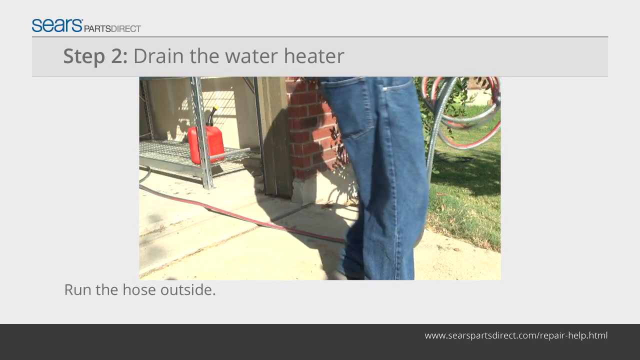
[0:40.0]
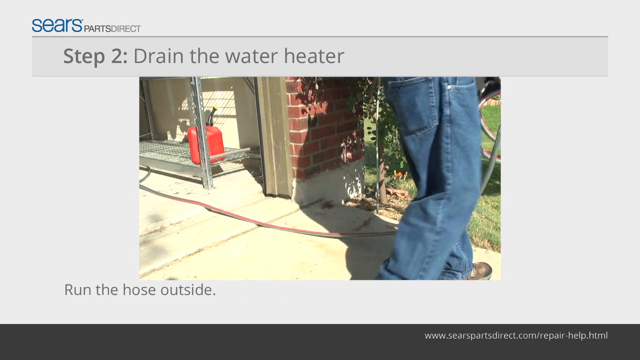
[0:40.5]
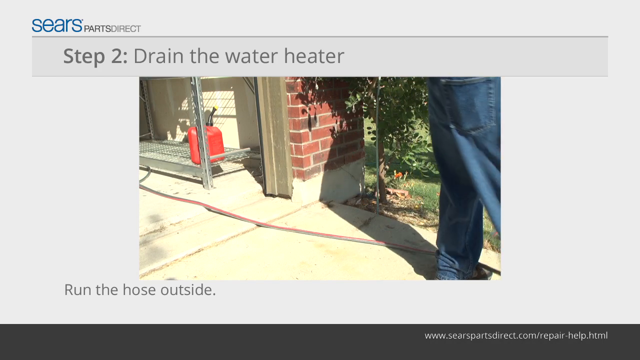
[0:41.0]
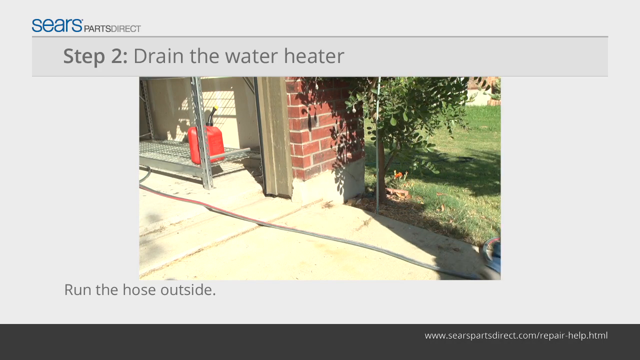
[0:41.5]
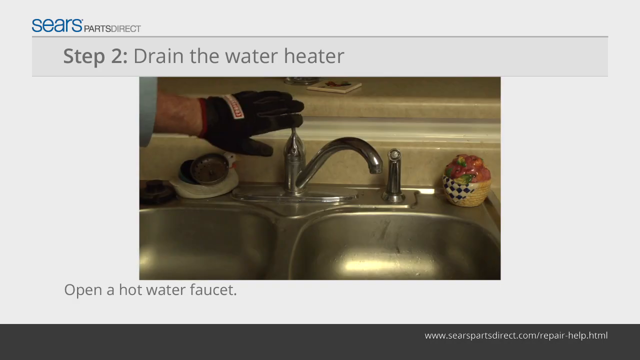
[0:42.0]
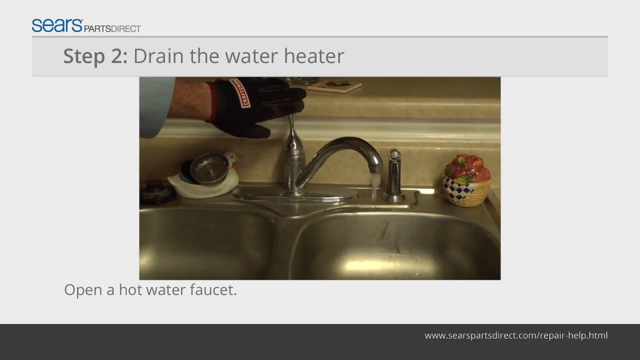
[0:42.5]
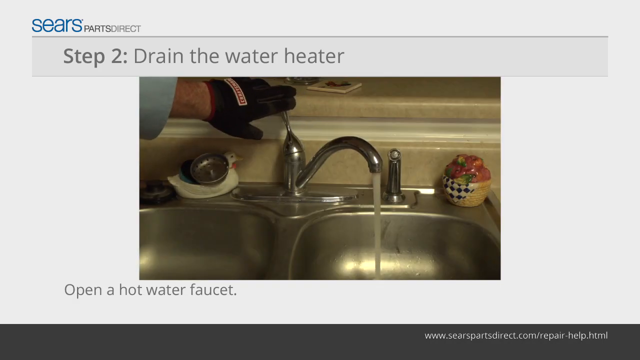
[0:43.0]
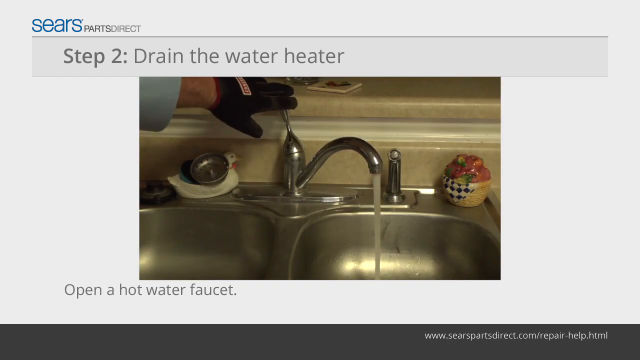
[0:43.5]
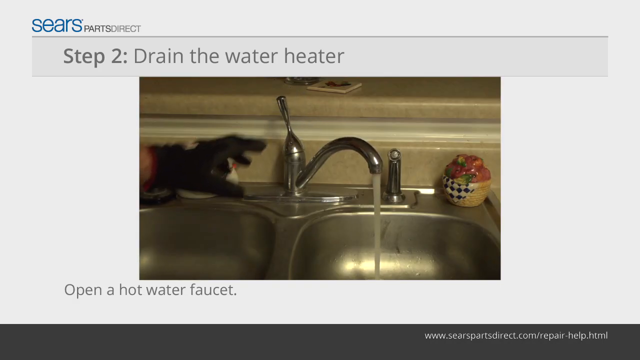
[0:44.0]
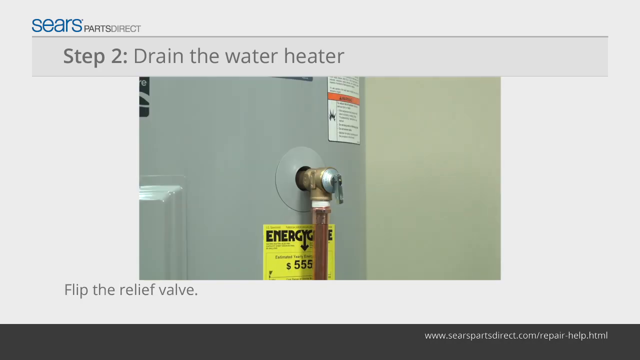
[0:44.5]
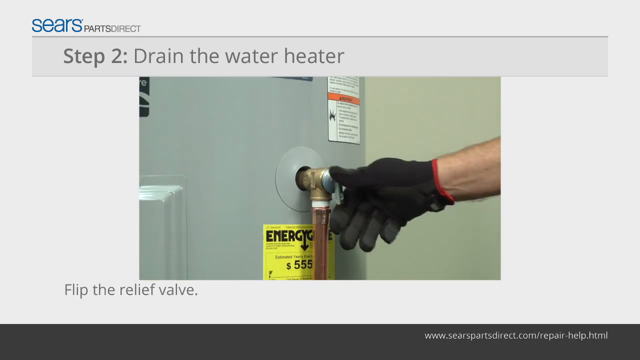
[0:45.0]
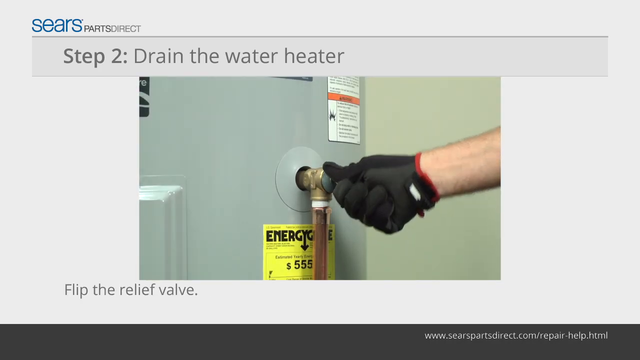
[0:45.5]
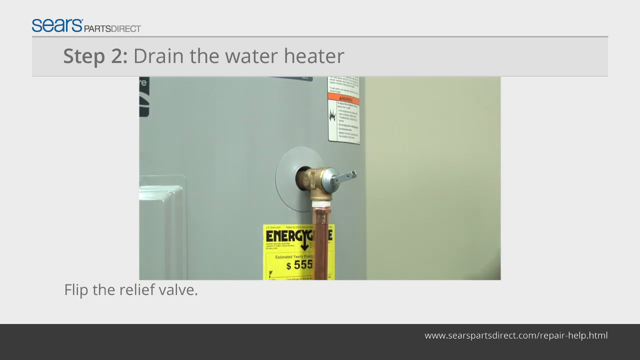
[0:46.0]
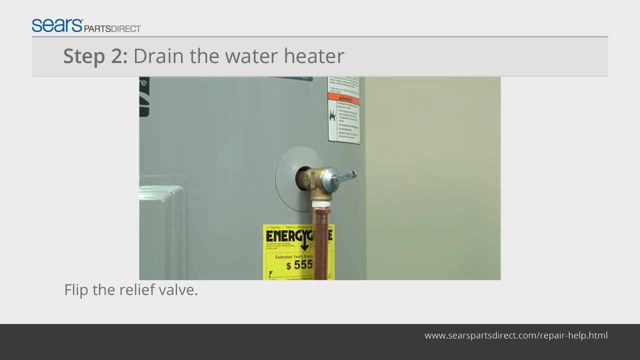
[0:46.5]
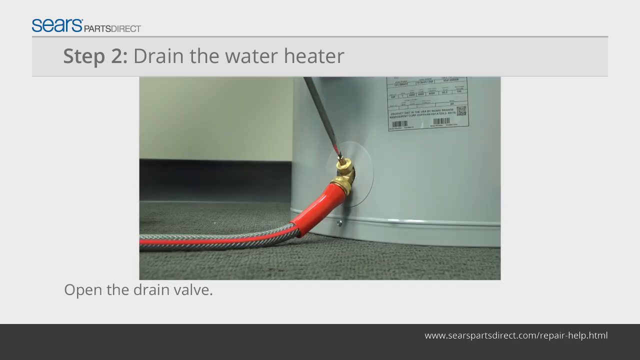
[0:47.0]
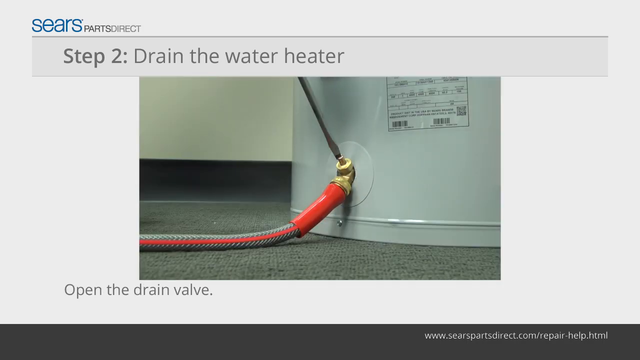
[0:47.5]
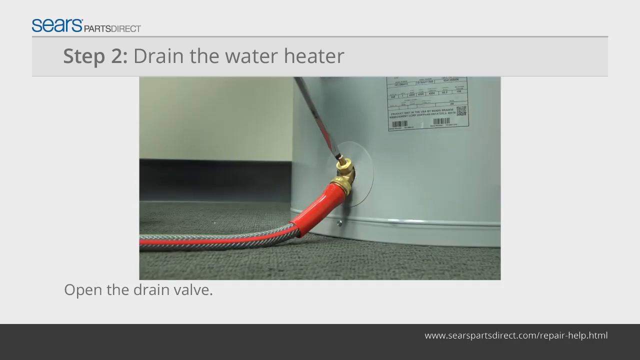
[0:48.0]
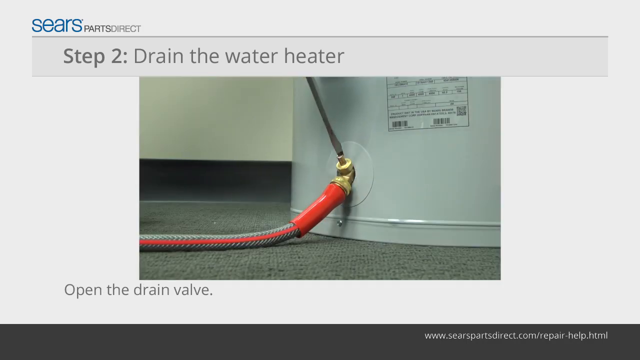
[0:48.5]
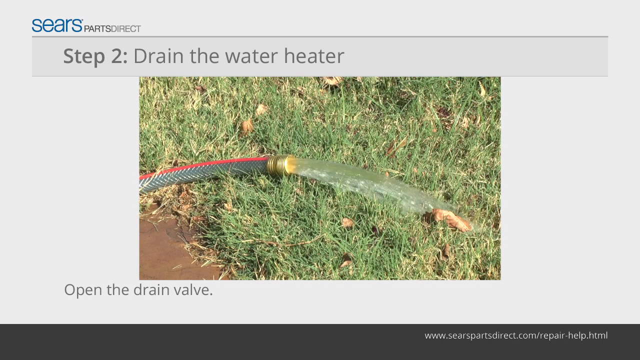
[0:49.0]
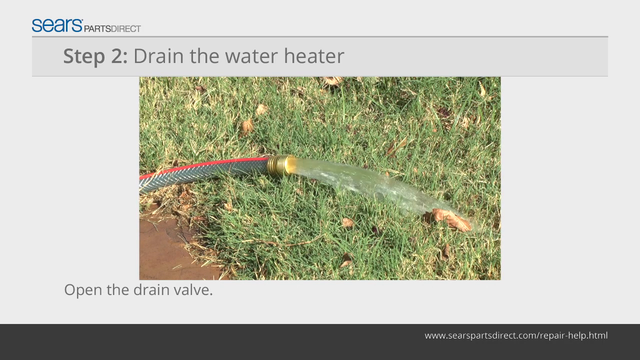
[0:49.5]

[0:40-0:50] The draining step continues. A hose connected to the water heater runs outside, and somebody walks toward the outside area, where grass and the bricks of the building are visible. Somebody in blue jeans walks away with the hose. The scene moves inside to a sink, where a hand in a black glove turns the water on. Back at the water heater, a small knob that was pointing downward is flipped up, almost like a switch being turned on. The view then moves to the bottom of the water heater, zoomed in, as a screwdriver comes down and something on the bottom of the water heater is unscrewed. Finally, the scene returns outside to the hose, with water coming out of it.